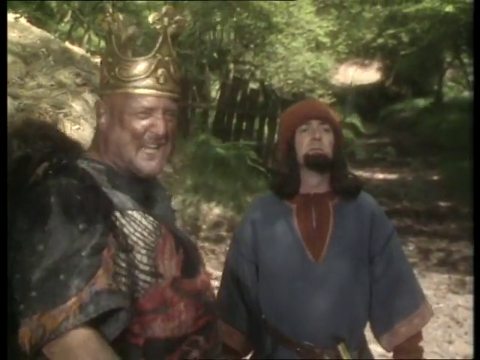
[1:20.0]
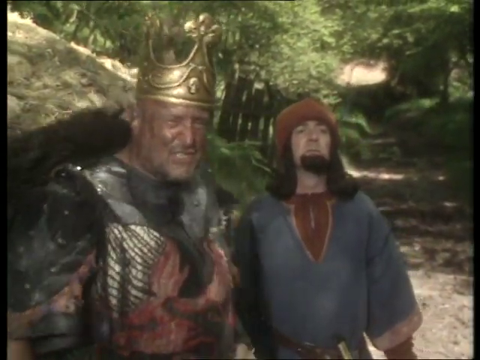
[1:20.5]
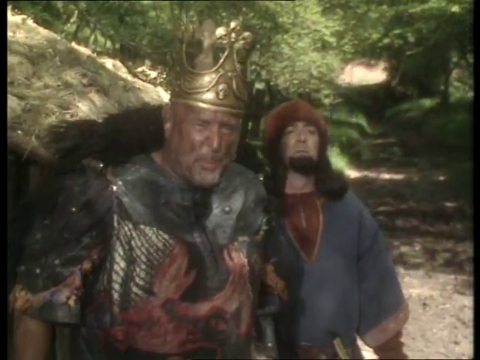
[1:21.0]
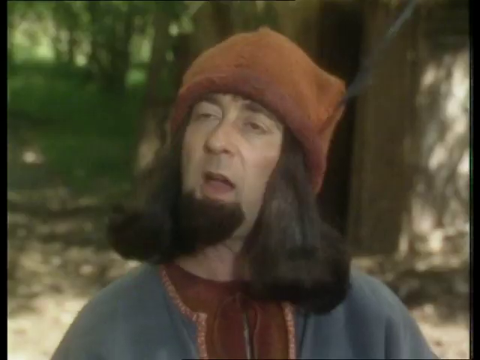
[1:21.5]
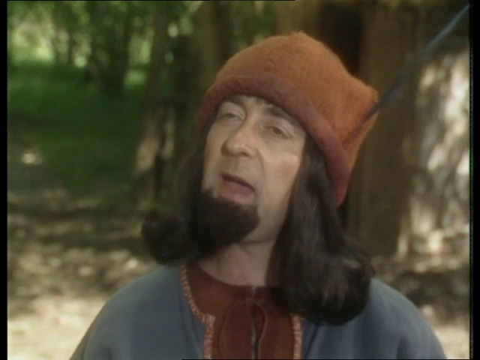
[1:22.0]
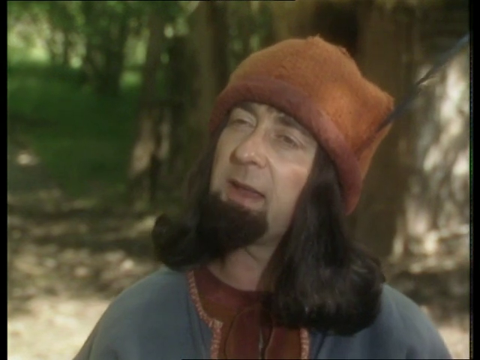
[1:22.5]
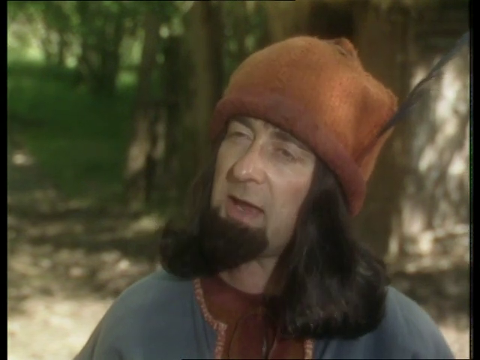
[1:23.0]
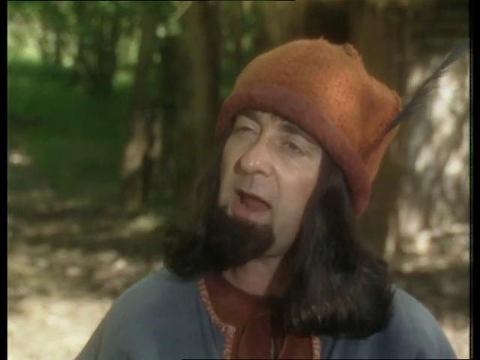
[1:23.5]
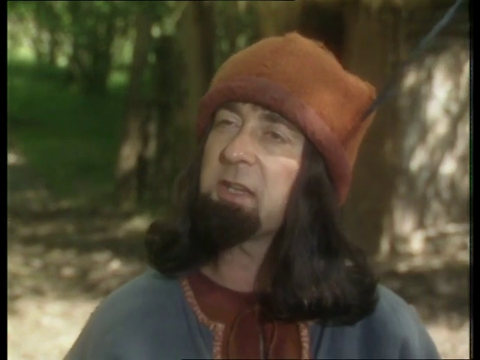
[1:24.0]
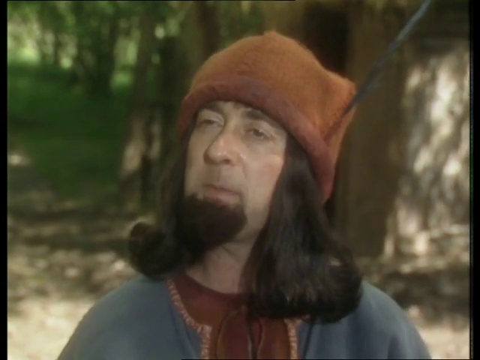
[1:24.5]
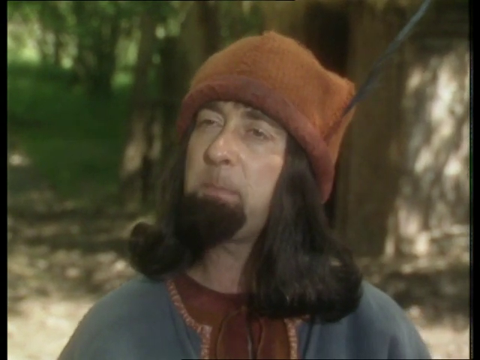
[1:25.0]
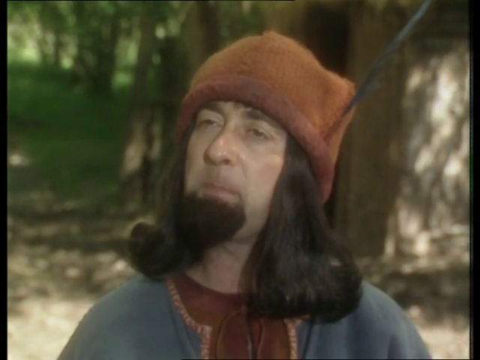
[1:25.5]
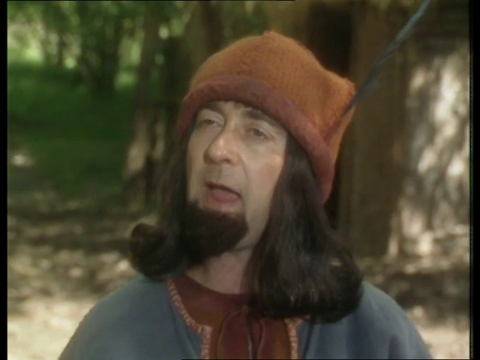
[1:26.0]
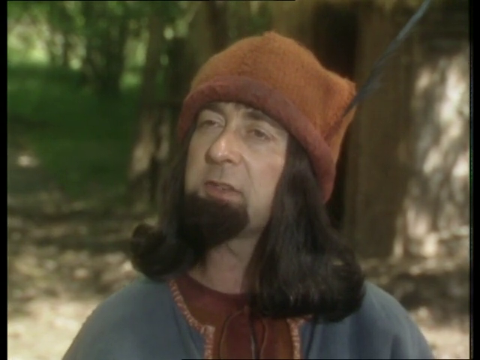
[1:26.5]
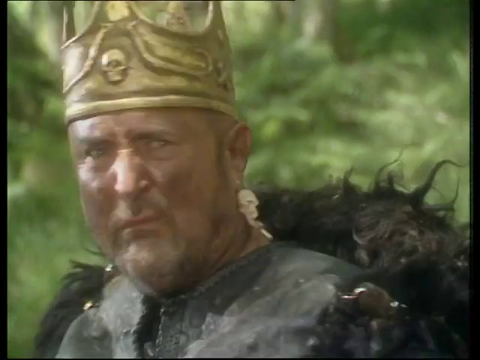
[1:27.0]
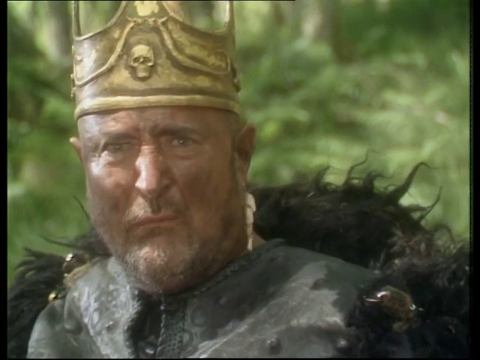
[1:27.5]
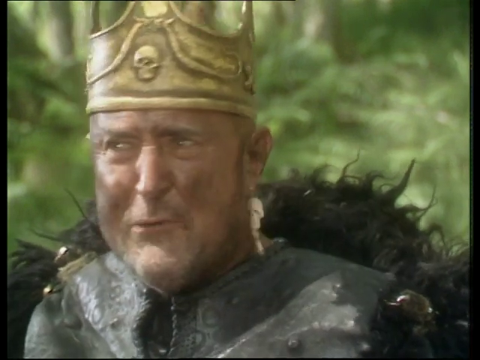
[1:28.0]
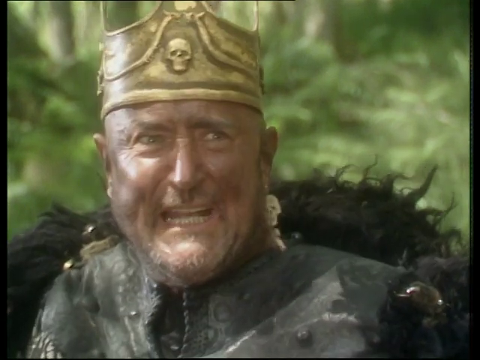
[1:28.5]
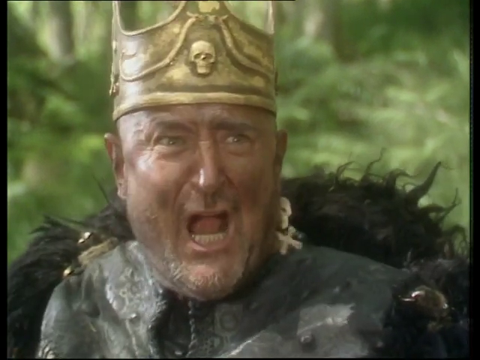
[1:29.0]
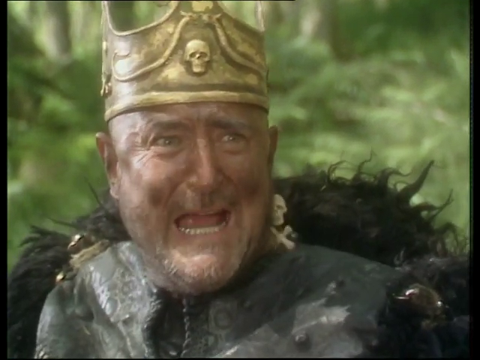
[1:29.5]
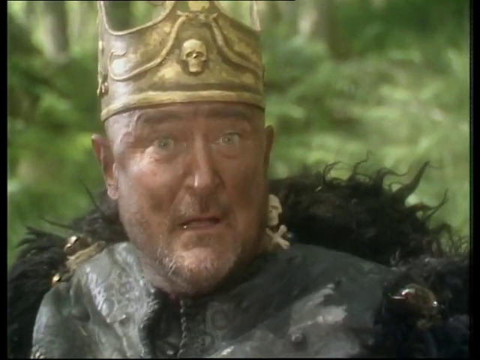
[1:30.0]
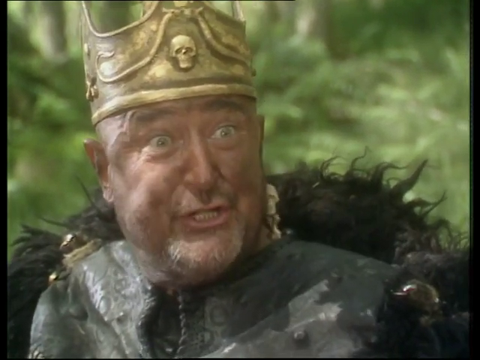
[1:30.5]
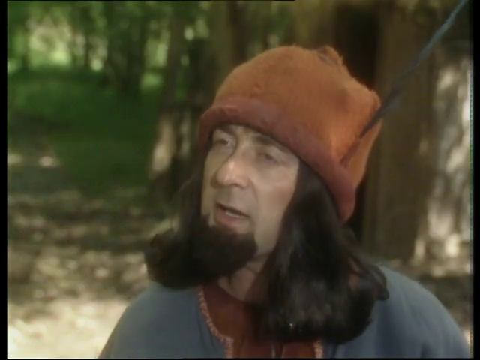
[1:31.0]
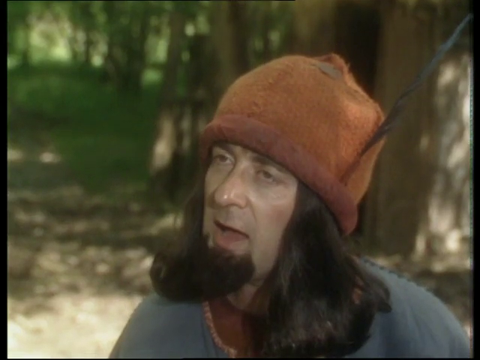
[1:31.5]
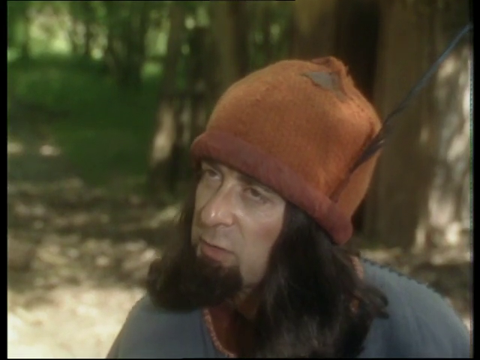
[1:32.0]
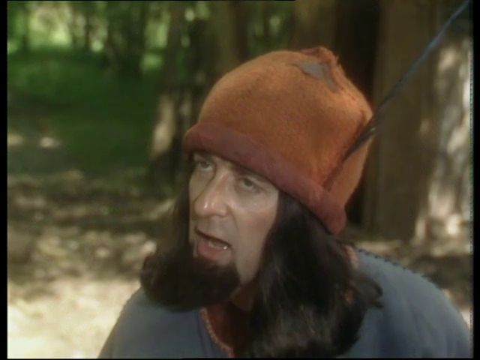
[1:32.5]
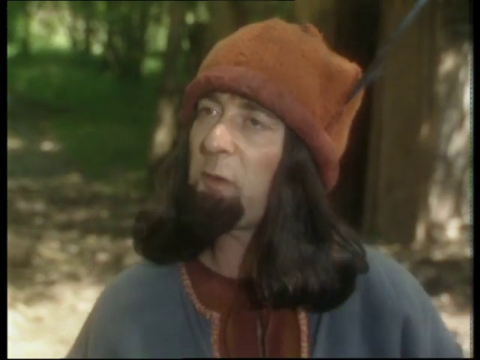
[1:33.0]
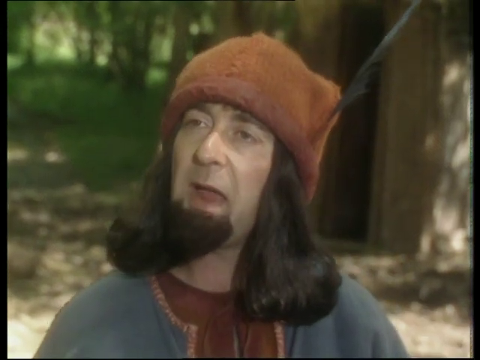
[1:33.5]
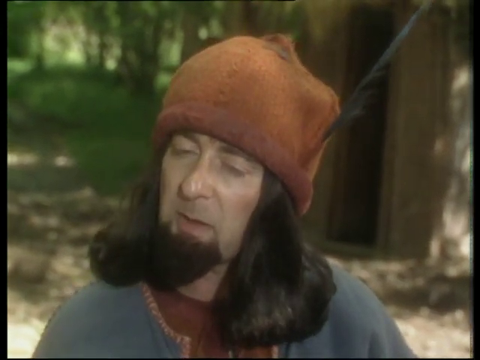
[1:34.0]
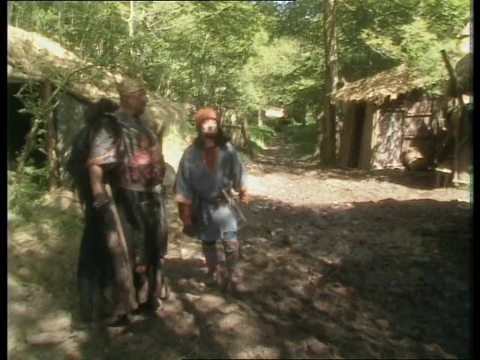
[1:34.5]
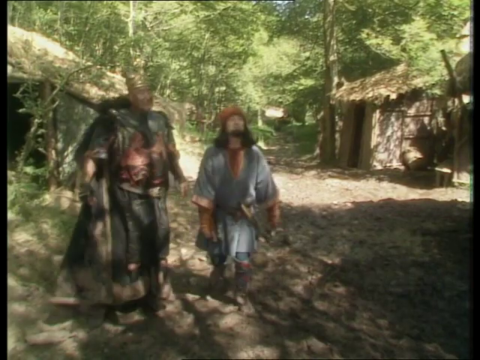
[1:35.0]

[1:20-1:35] The king is now closer to the camera and looks like he is looking down at somebody off camera. His face is kind of oily or dirty, with black spots, and his crown is yellow. The squire character is also visible, with the red hat, long curly hair coming down, and a prominent, fairly long chin hair; he is also looking. The video cuts to the squire talking and zooms in on a shoulder shot of him. He is looking up, presumably at the king, who is off camera. He looks complacent while talking, but the video kind of glitches to make his mouth and jaw open and close very quickly. The video cuts to a shot of the king turning toward the squire. He has an earring with a cross in it, and his golden crown is kind of tarnished, with a skull embedded in it. The king looks a bit upset and appears to be bald; his eyebrows are furrowed and he looks as if he is screaming something. Near the end of the shot, as he speaks, he adjusts his eyebrows to make his eyes wider. The squire is then shown again, speaking in a very calm fashion, before a transition to a wide shot of both the king and the squire walking toward the camera as the video ends.